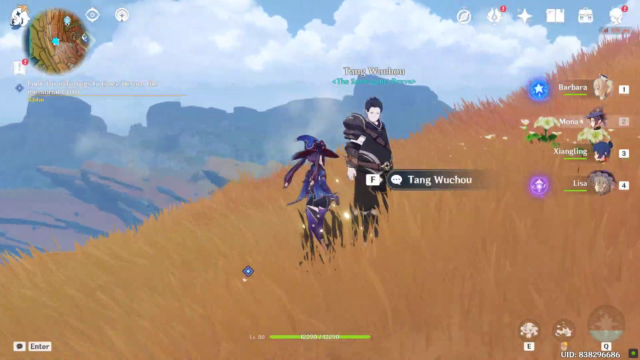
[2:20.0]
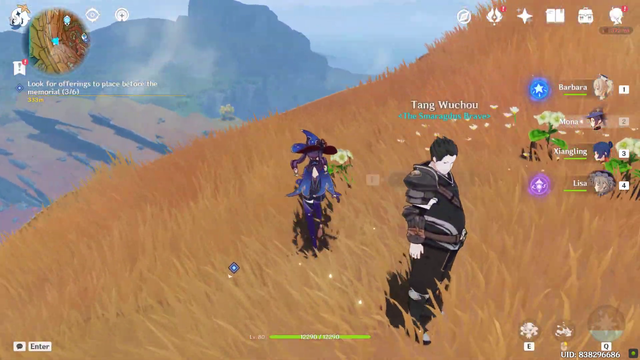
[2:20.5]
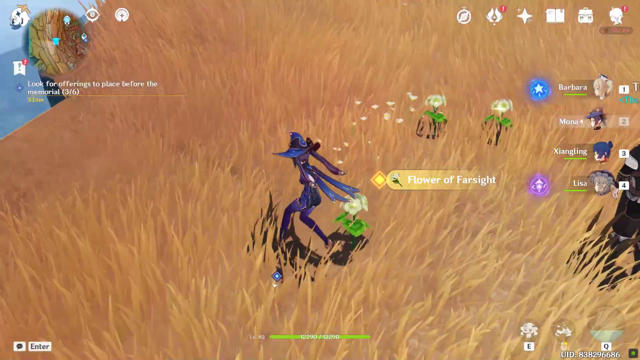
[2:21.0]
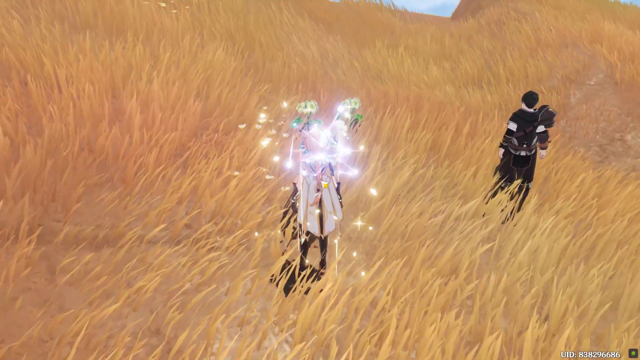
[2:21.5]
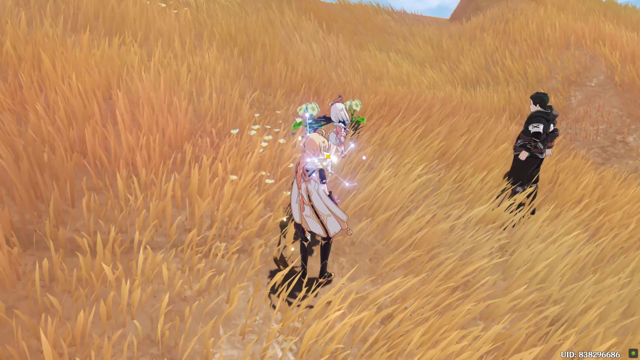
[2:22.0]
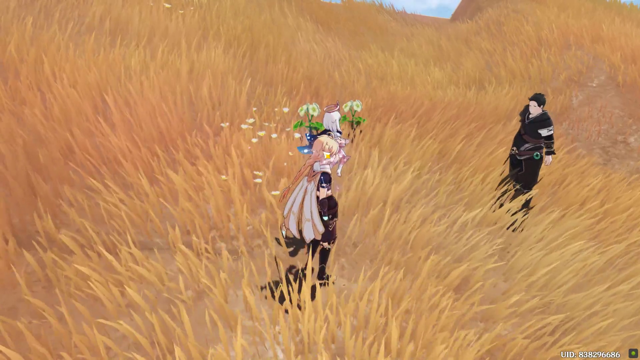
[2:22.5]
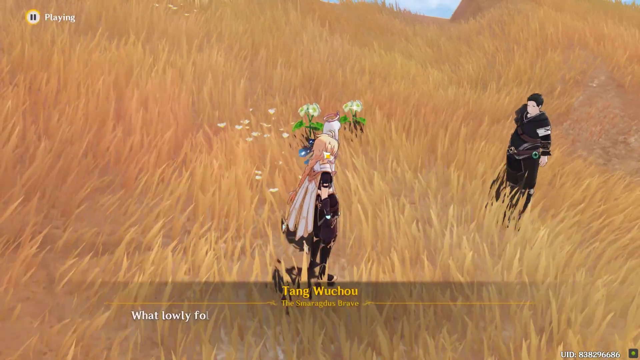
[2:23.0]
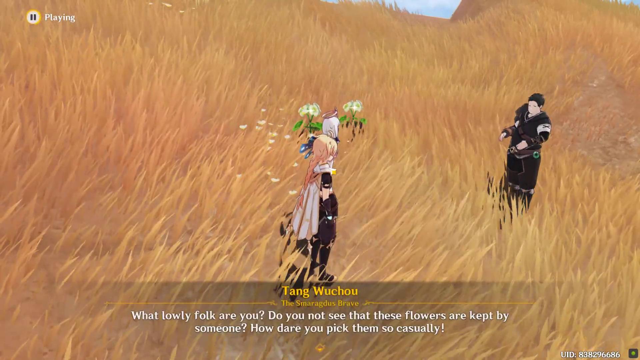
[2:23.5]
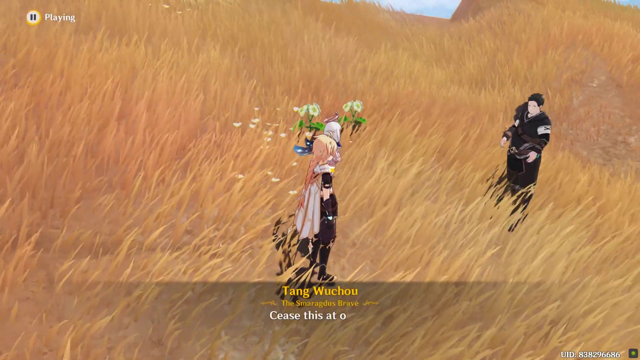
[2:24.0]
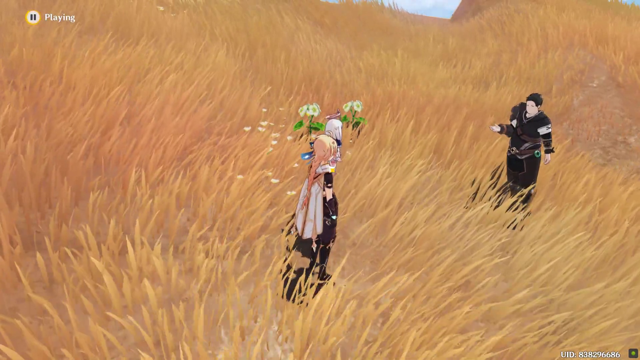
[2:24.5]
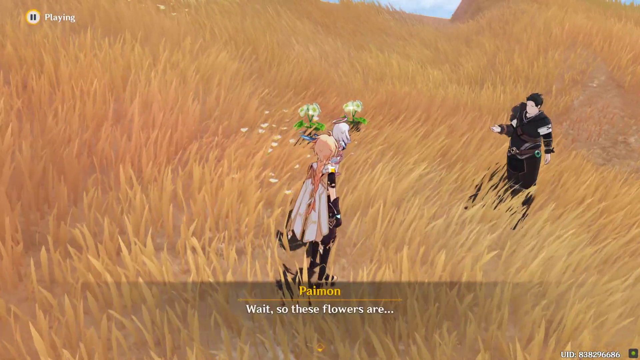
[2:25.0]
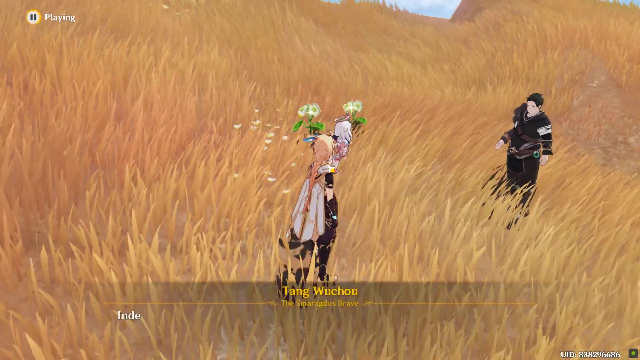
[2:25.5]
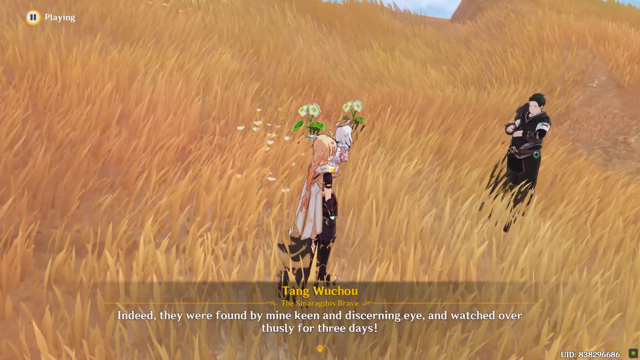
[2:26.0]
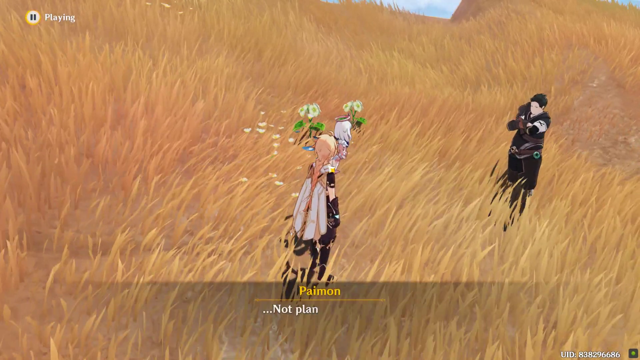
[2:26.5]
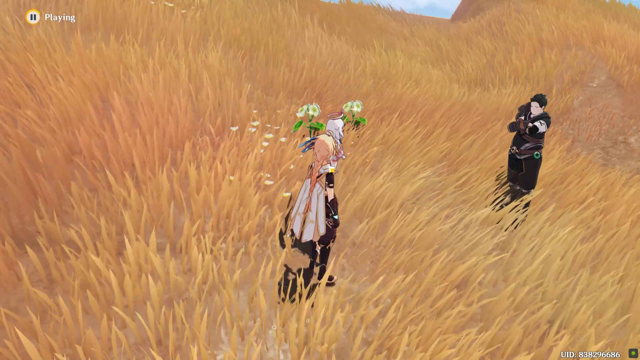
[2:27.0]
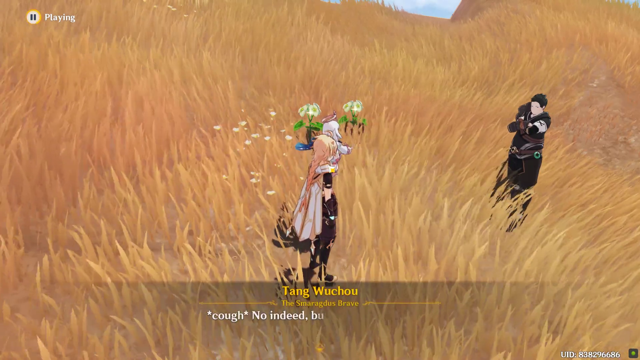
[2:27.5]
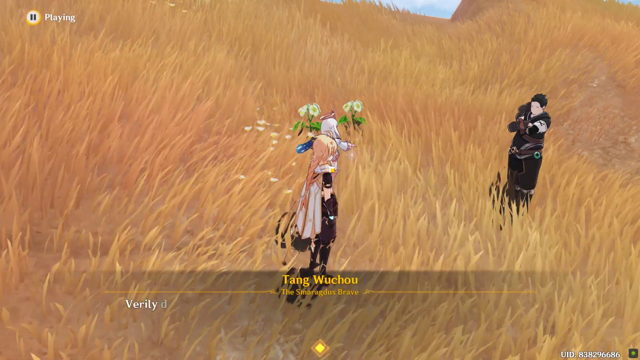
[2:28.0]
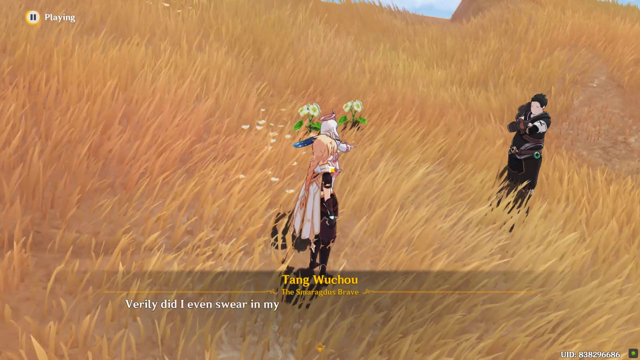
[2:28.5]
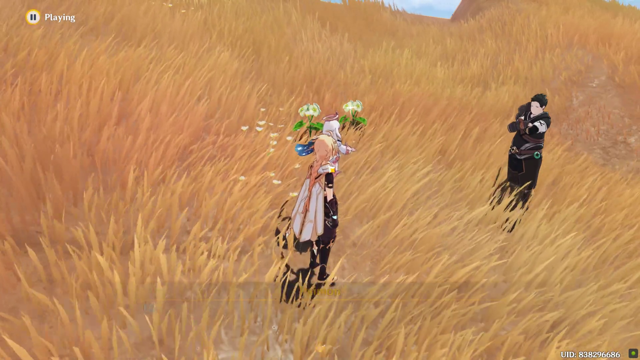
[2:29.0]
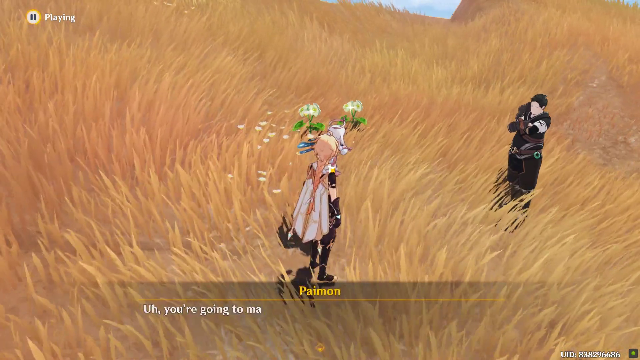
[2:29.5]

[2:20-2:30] She moves on from the man she has been talking to and appears to pick up a flower again, back in her purple garb. It is a white flower called flower of Farsight. She then changes back into the blonde character, and text reads "Tang Wu Chao" and "What lowly folk are you?" Another character with blondish hair appears to have joined them, though it is difficult to see from this vantage point. Text reads "Wait so these flowers are...", and the text goes by very quickly as a whole conversation plays out, as if sped up. At one point Tang Wu Chao says "verily did I even swear in my heart that I shall care for these flowers and create a lovely and great glazed lily garden. far from the strictures", after which the text can no longer be read, but the long conversation continues. The character who joined them looks like she has white hair, so she might be Barbara.